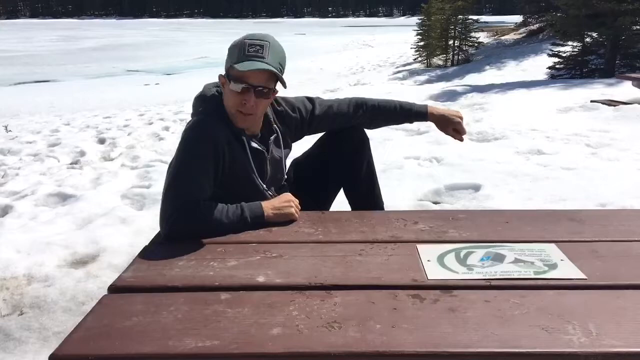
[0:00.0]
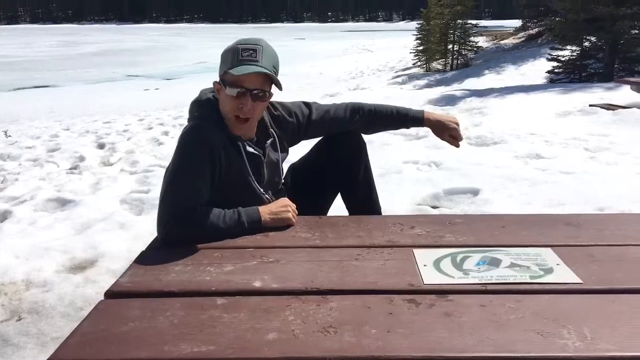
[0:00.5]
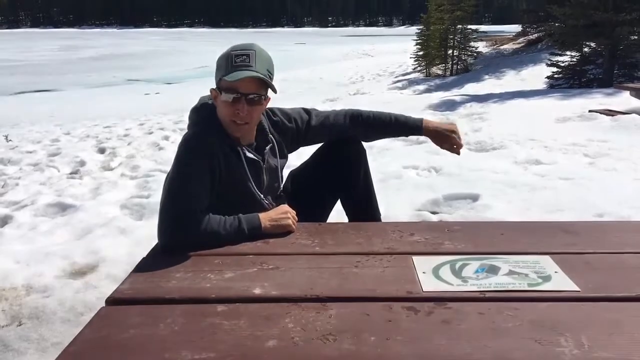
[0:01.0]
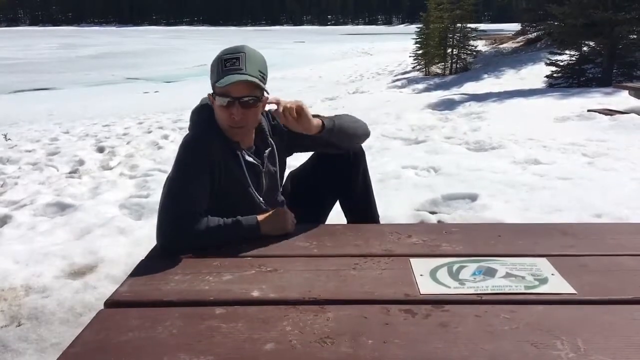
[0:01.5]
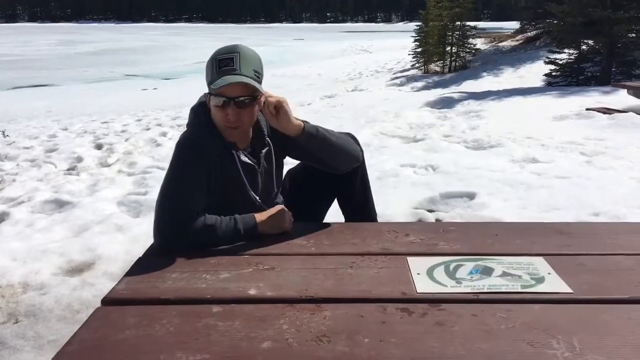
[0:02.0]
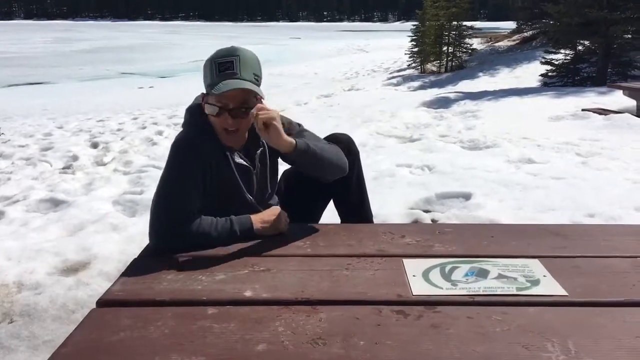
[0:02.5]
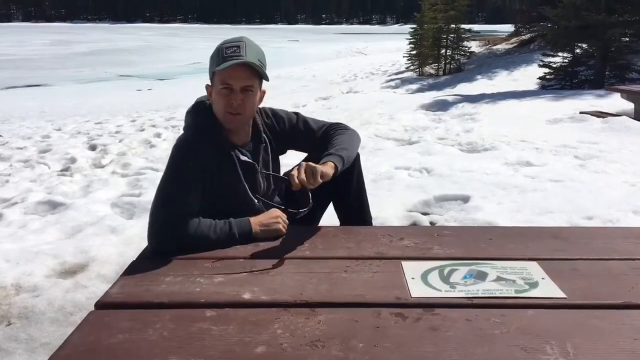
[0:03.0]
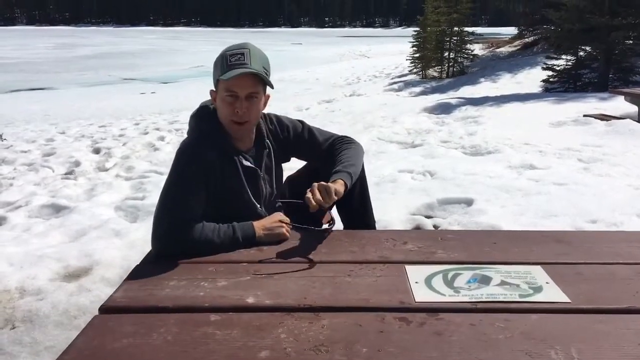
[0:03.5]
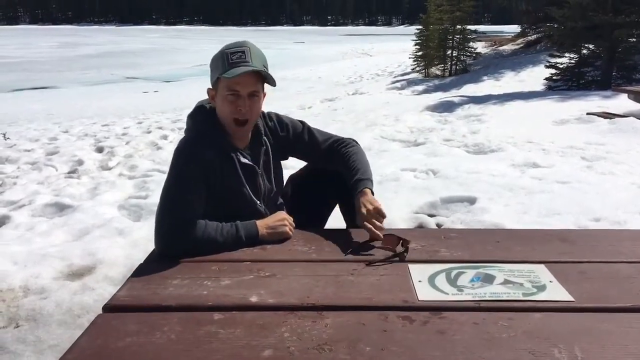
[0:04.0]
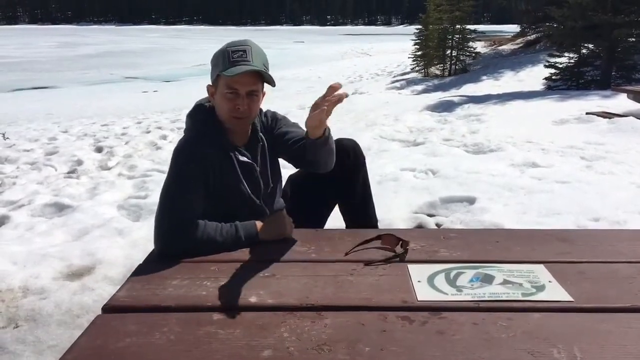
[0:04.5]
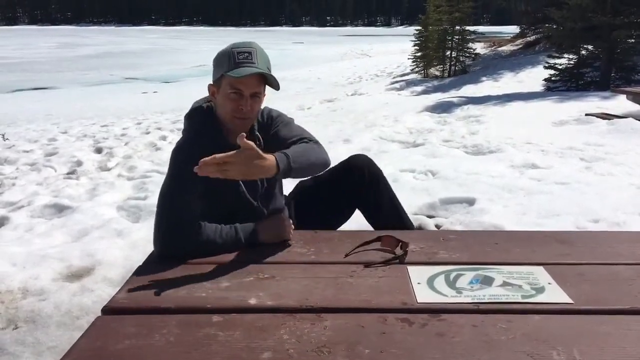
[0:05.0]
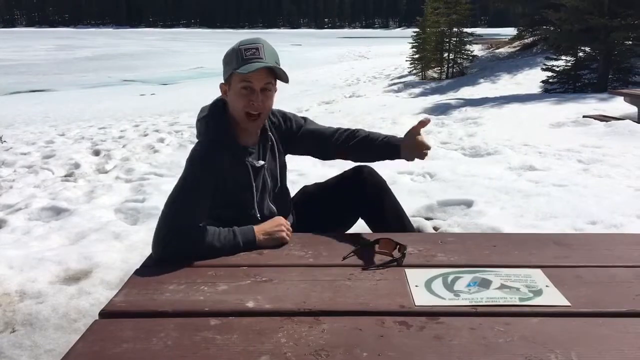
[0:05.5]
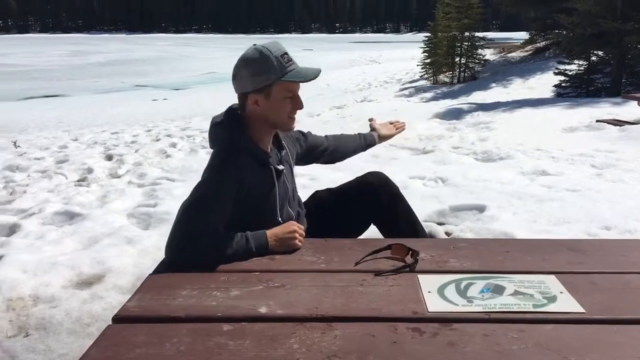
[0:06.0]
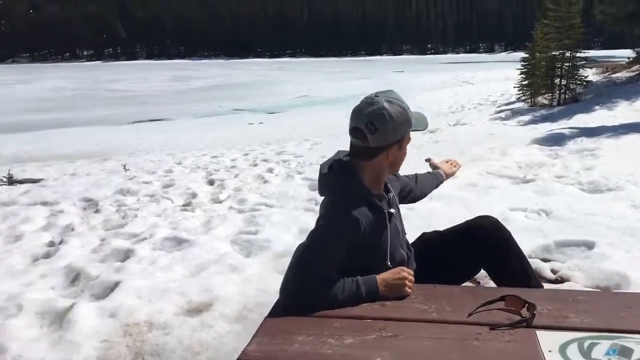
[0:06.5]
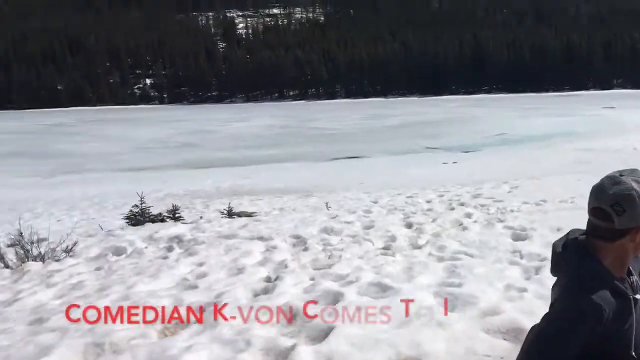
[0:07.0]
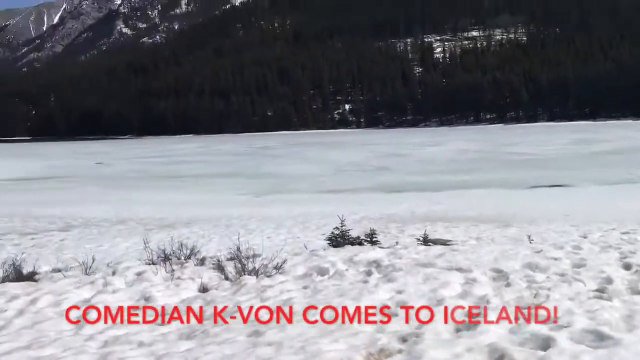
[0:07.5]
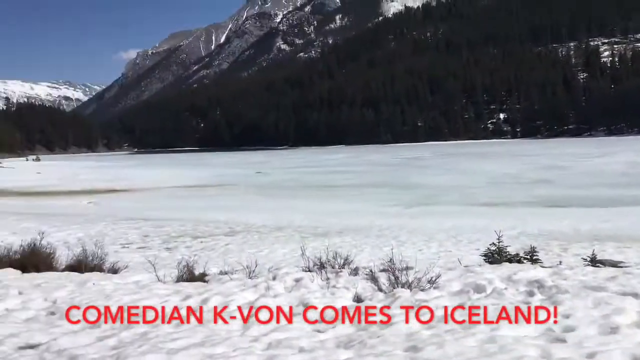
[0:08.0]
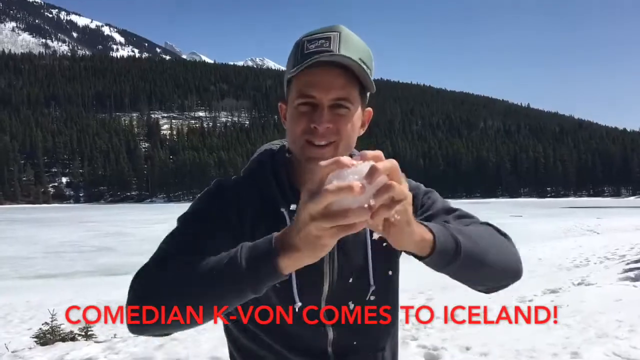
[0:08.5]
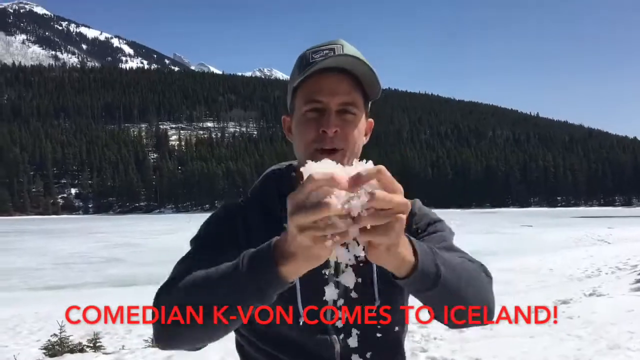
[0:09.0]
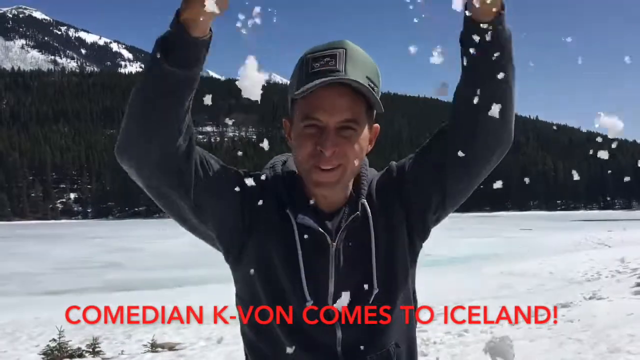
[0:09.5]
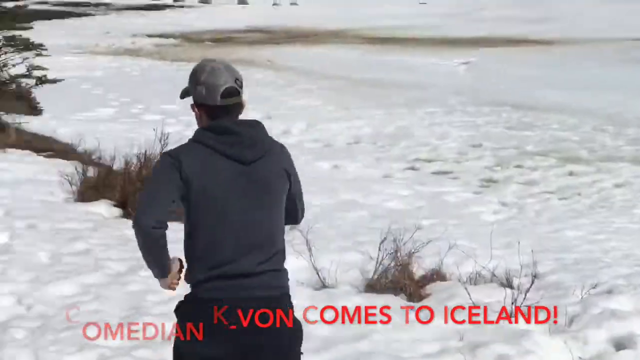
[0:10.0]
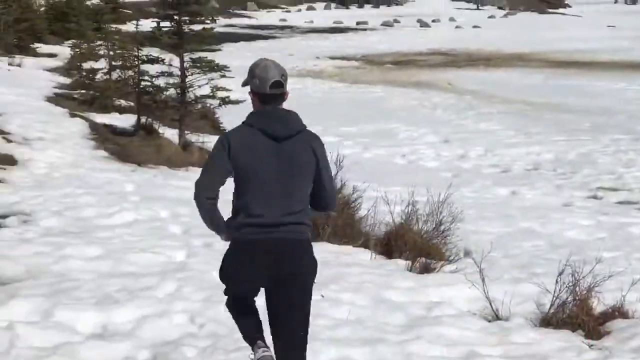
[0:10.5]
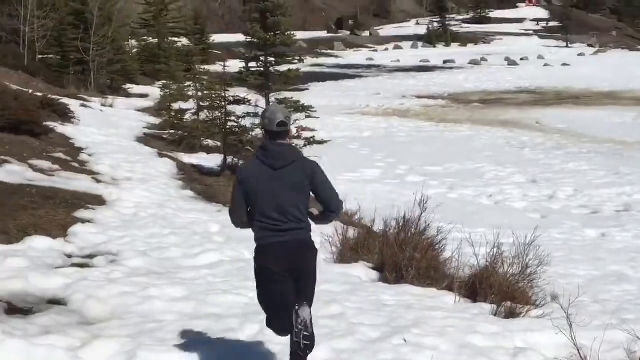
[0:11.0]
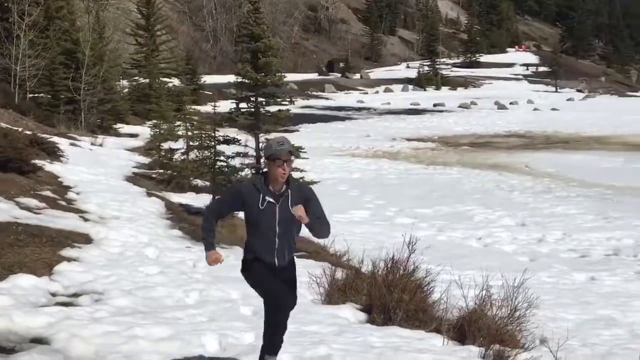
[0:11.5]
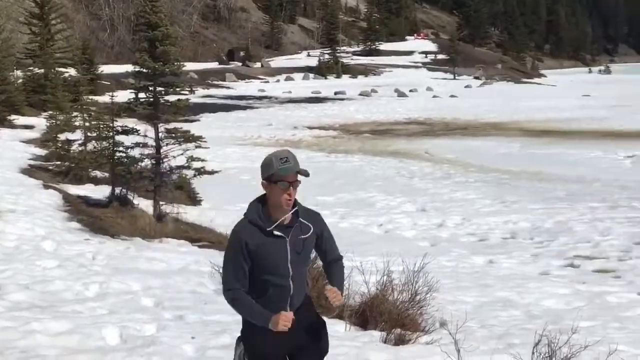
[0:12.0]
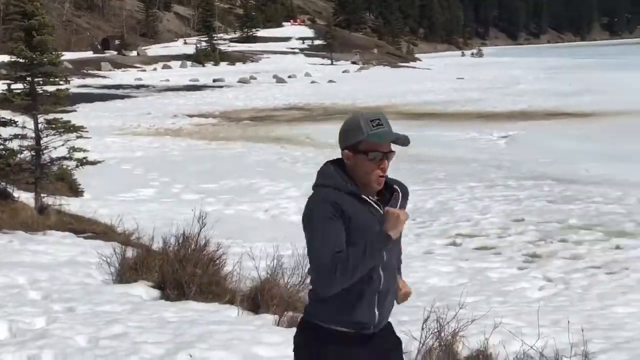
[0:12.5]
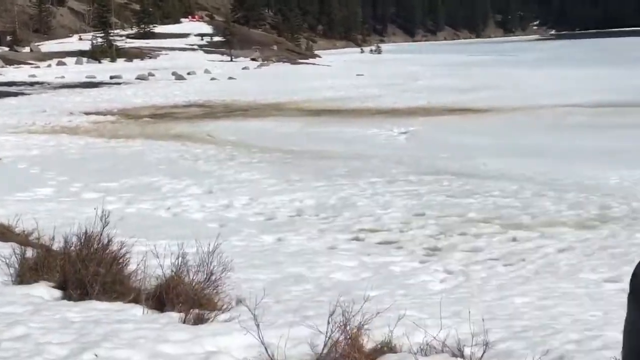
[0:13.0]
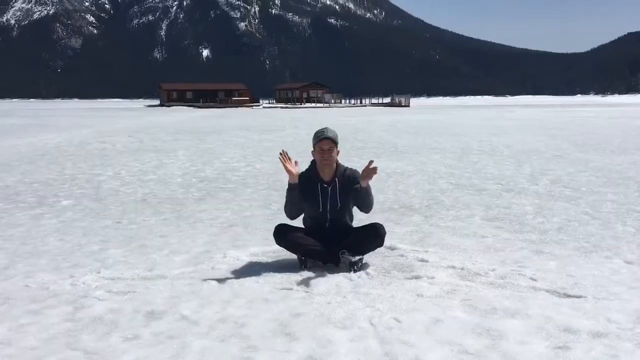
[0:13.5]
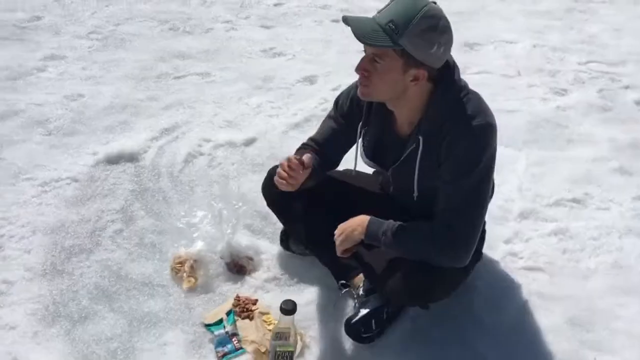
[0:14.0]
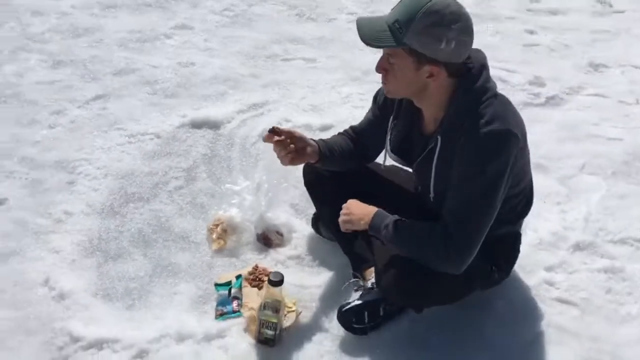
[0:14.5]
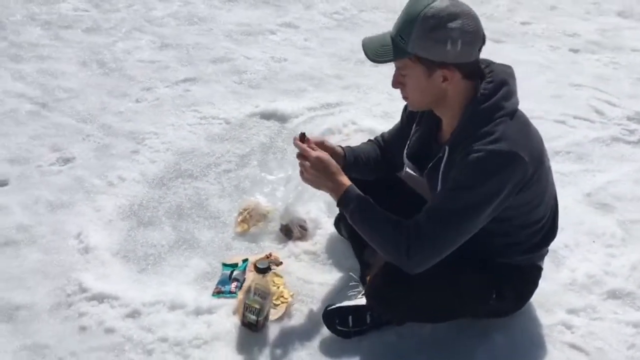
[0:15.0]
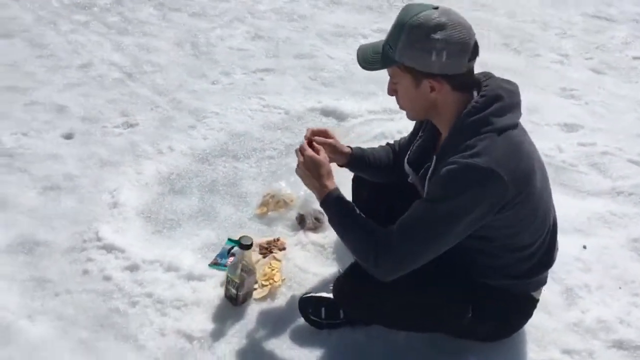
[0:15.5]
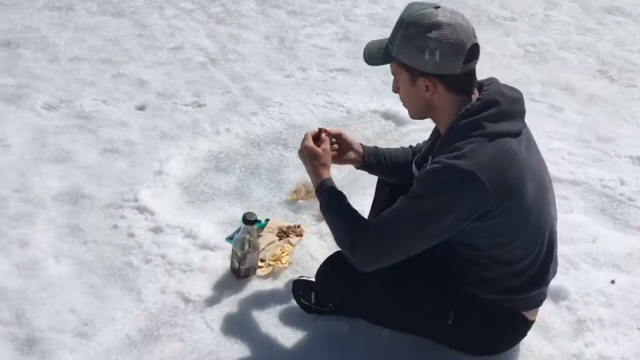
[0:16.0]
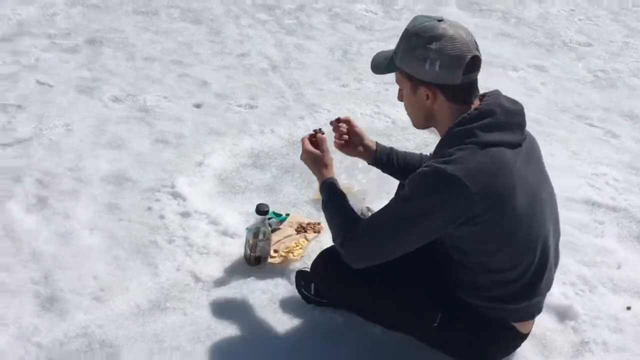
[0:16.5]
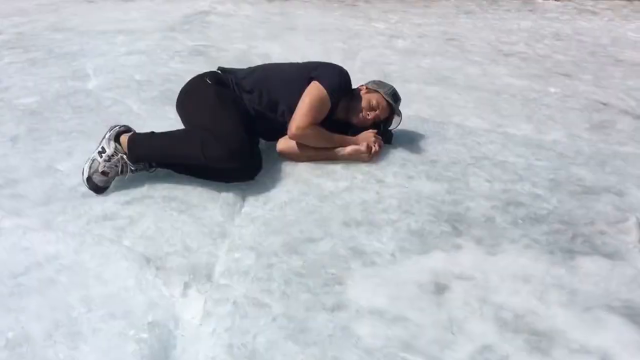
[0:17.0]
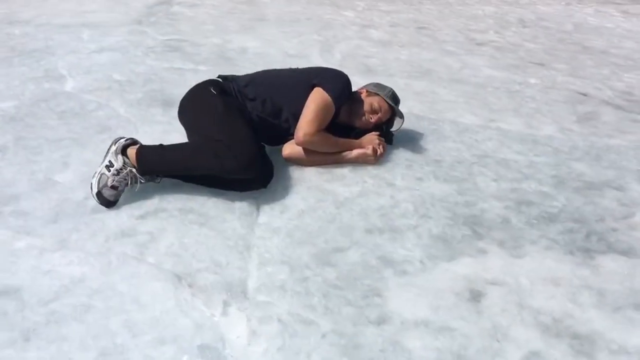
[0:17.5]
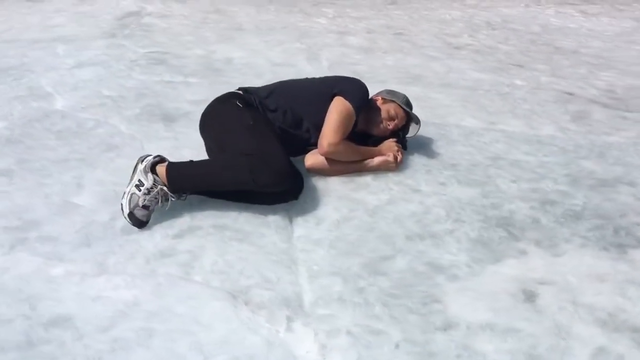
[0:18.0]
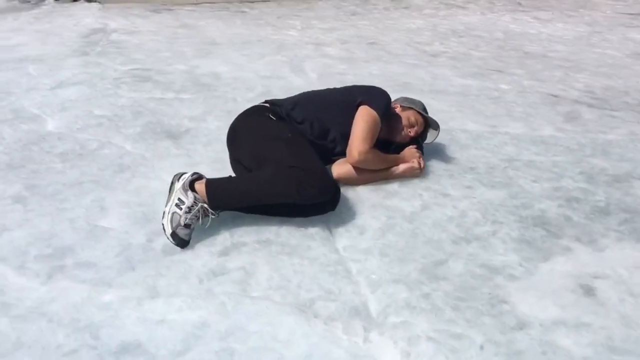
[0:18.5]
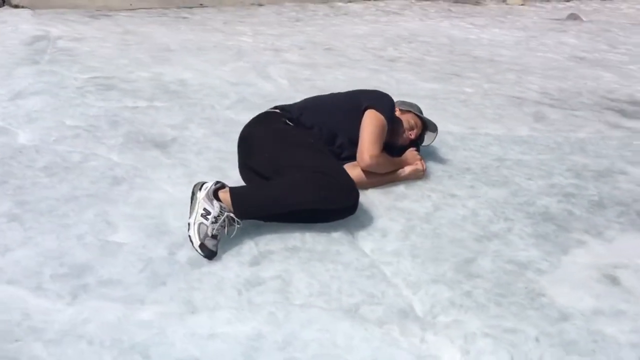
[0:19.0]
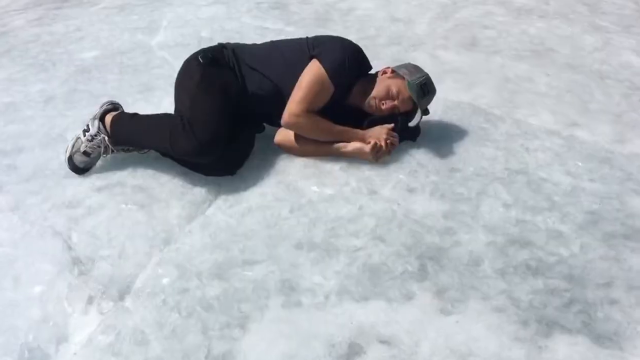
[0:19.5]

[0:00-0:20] A man appears to be sitting on a park bench at a brown, wooden-coloured table. He wears a gray sweater, a green baseball cap, sunglasses, and what looks like dark pants. Behind him there is a lot of snow on the ground, along with green pine trees. He takes off his sunglasses and starts talking to the camera, then with his left hand he kind of opens his hand, palm up, and shows the background. The camera pans to the left, showing a landscape of snow and pine trees, with snow-covered mountains in the background. He then runs along, and later he is seen eating and lying down on the snow.